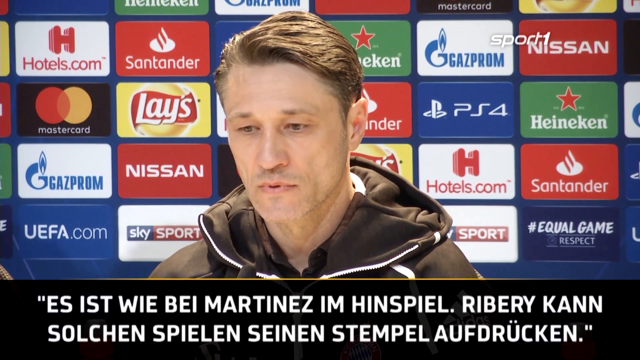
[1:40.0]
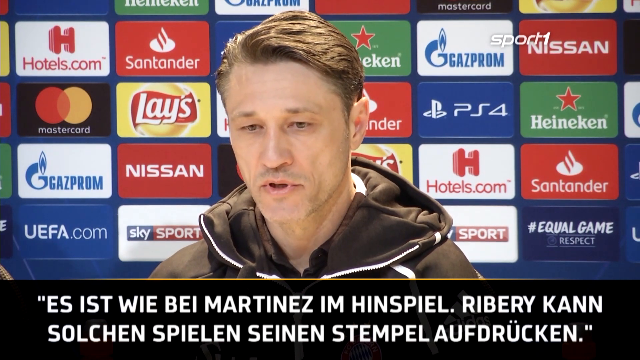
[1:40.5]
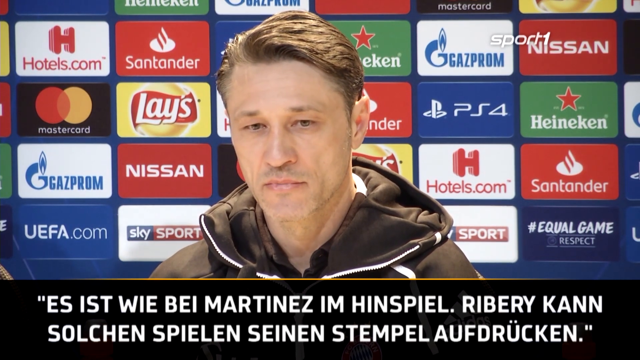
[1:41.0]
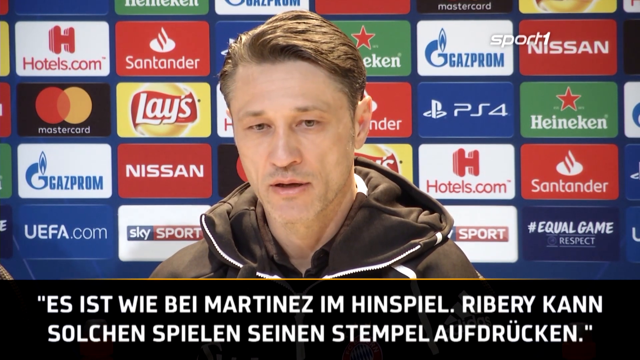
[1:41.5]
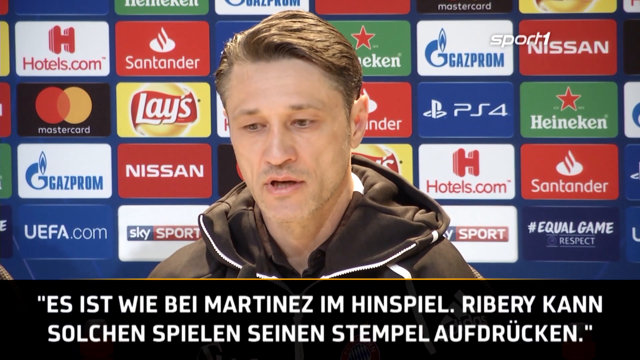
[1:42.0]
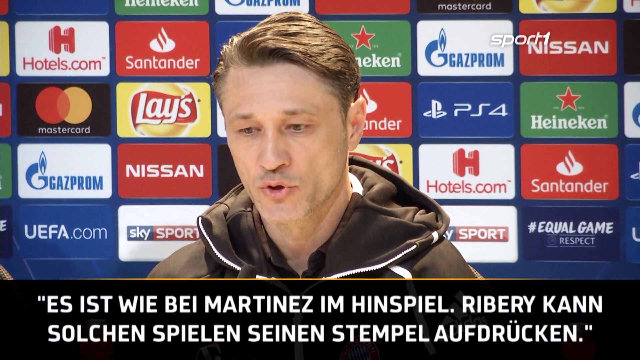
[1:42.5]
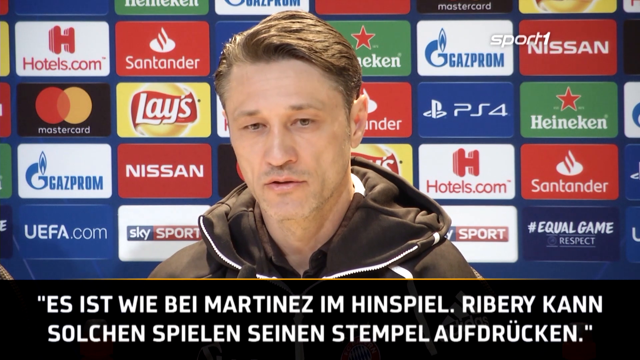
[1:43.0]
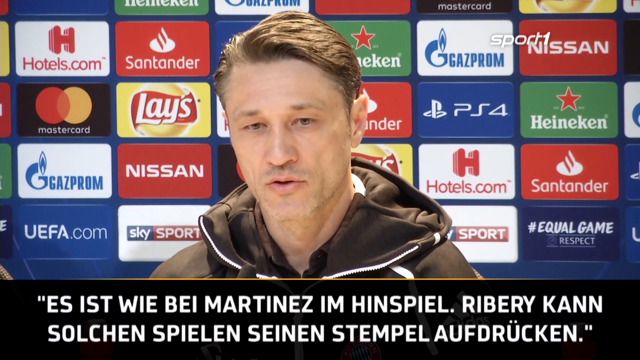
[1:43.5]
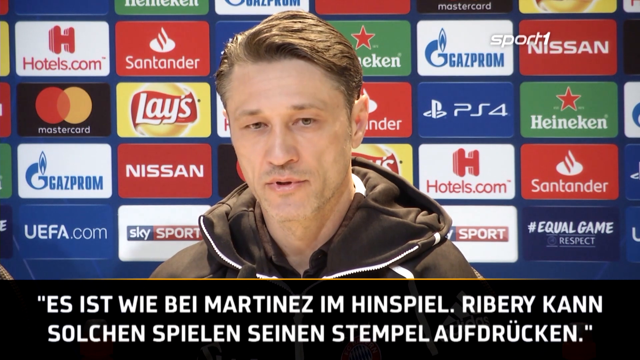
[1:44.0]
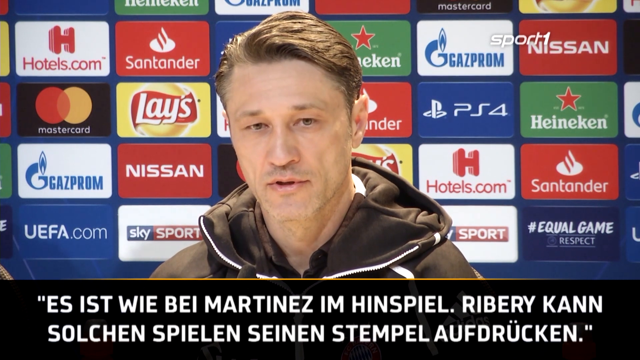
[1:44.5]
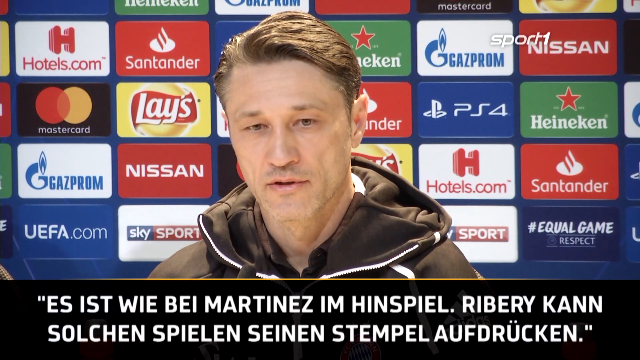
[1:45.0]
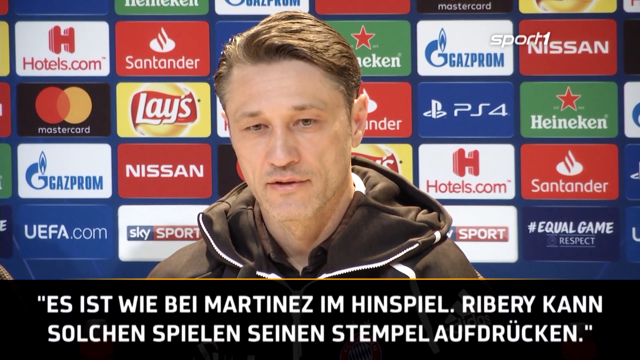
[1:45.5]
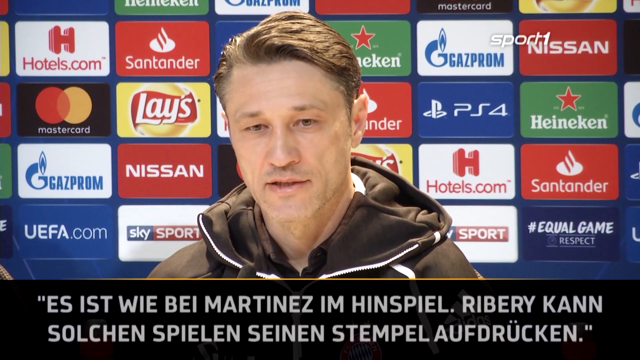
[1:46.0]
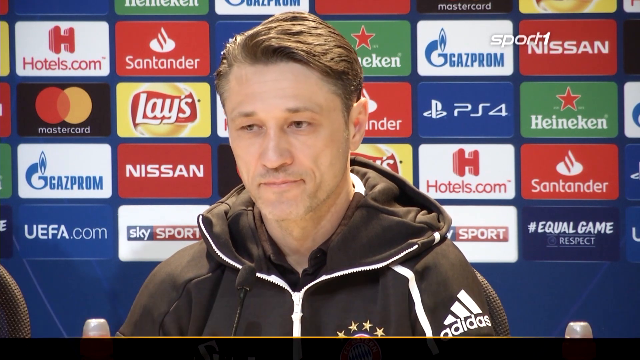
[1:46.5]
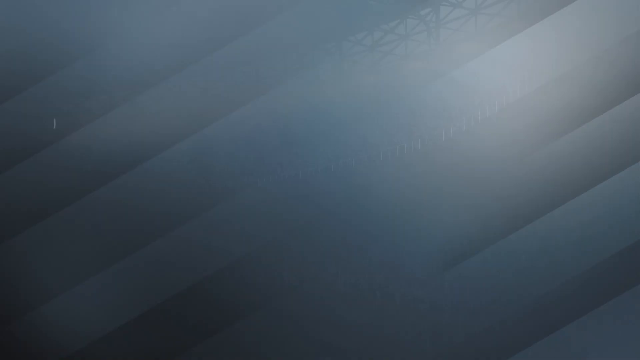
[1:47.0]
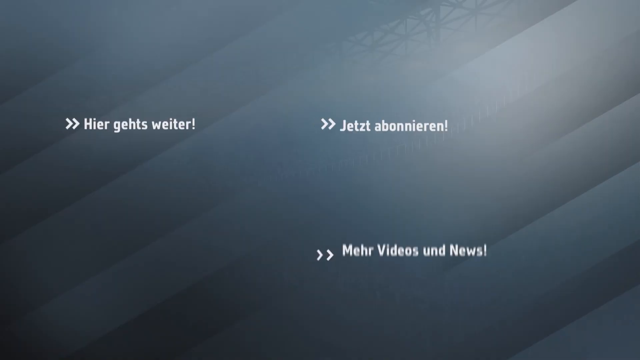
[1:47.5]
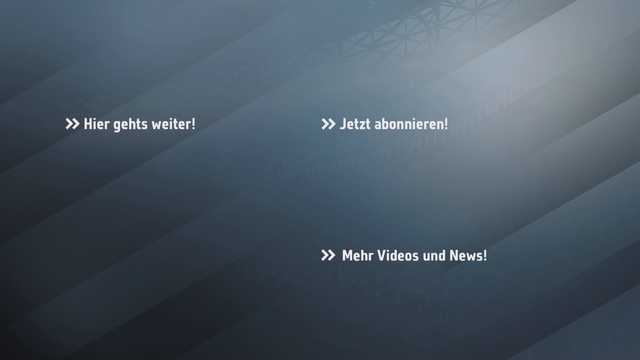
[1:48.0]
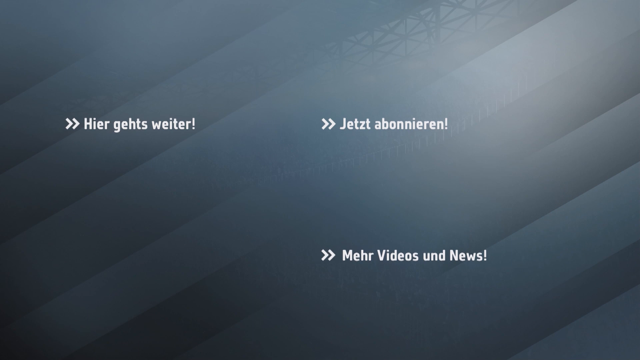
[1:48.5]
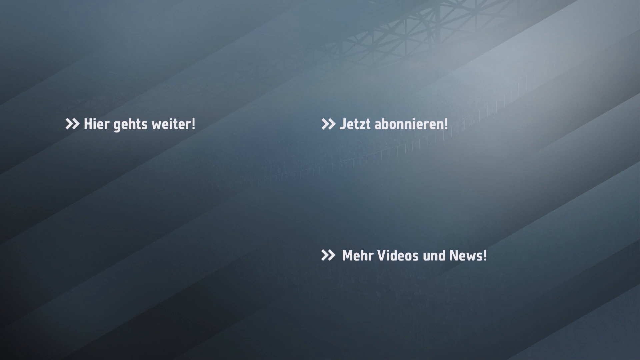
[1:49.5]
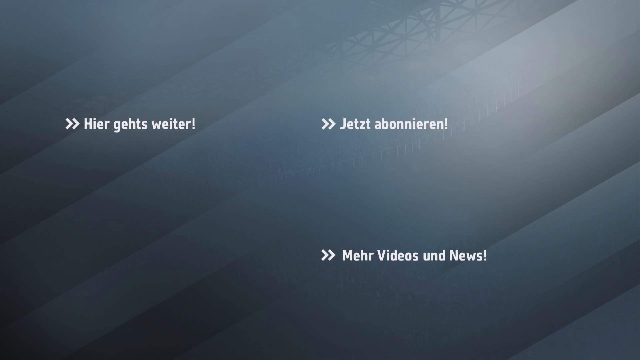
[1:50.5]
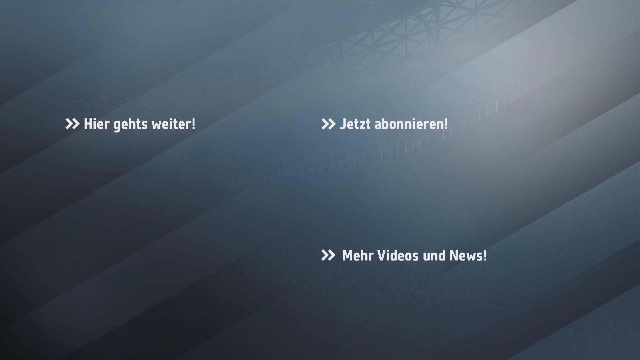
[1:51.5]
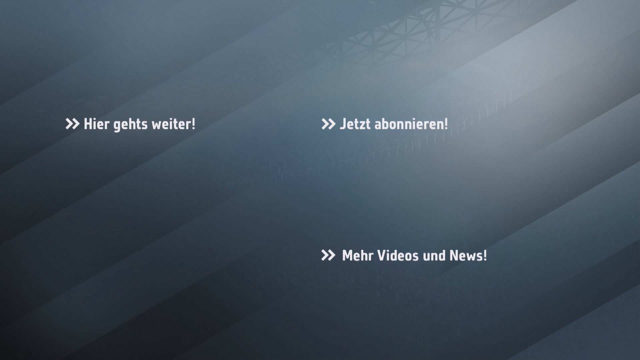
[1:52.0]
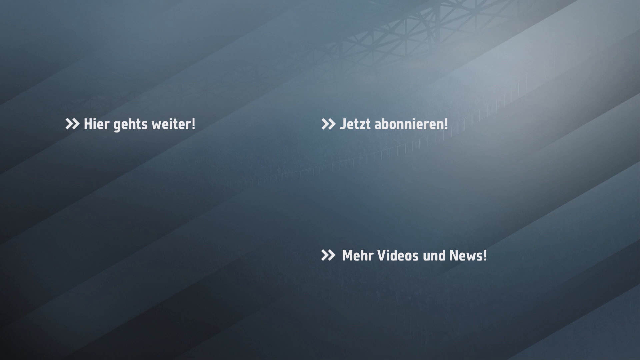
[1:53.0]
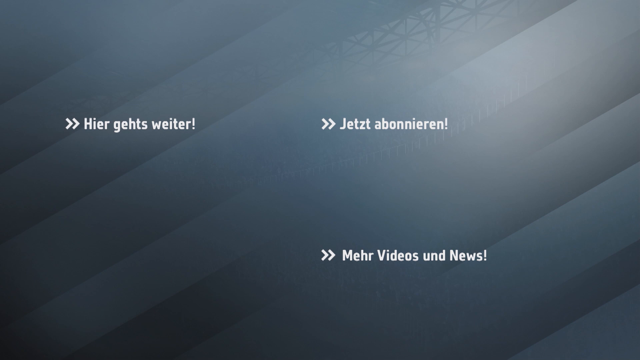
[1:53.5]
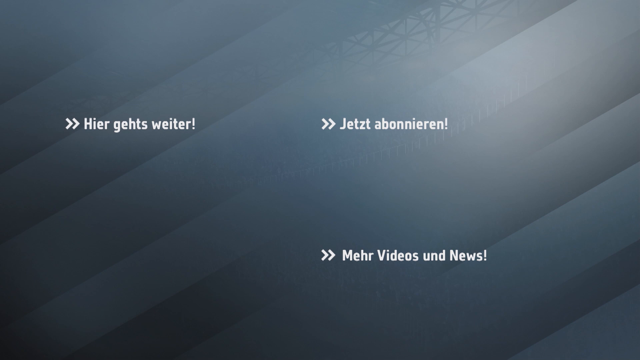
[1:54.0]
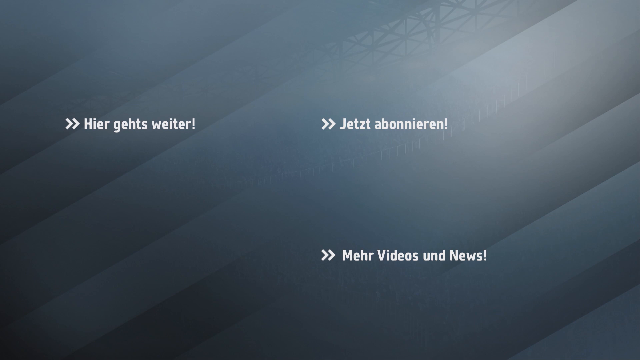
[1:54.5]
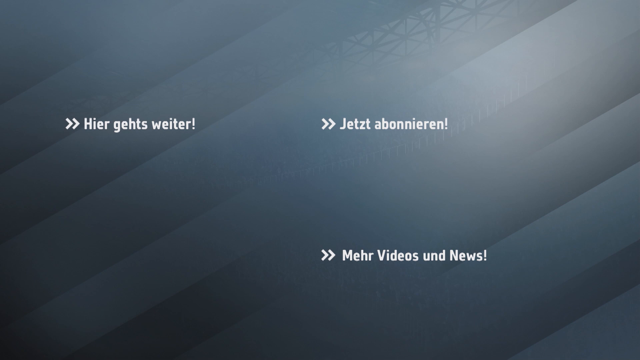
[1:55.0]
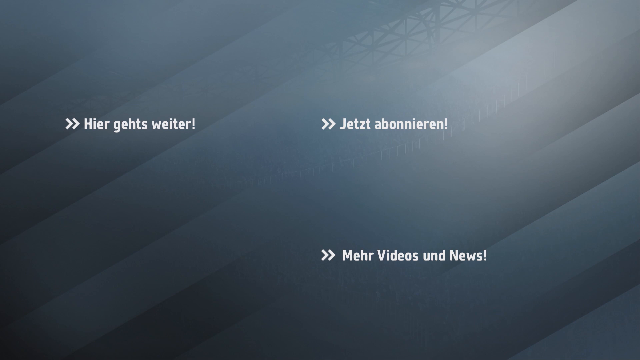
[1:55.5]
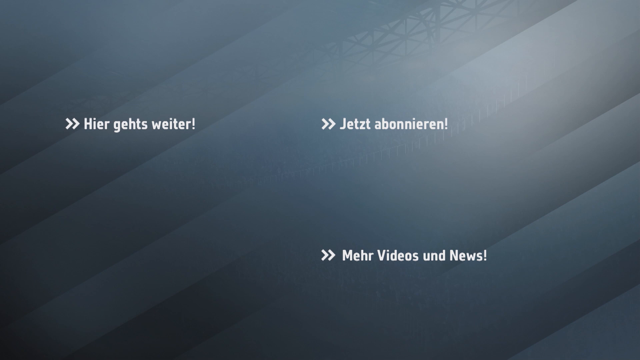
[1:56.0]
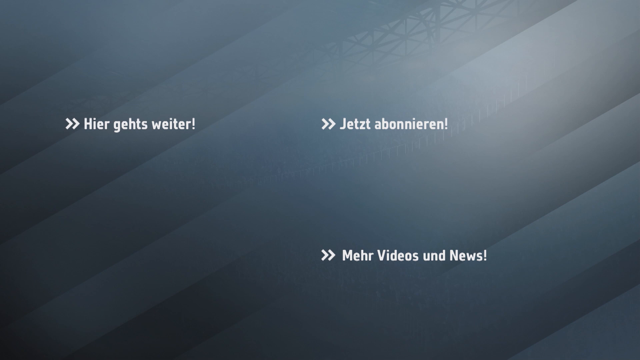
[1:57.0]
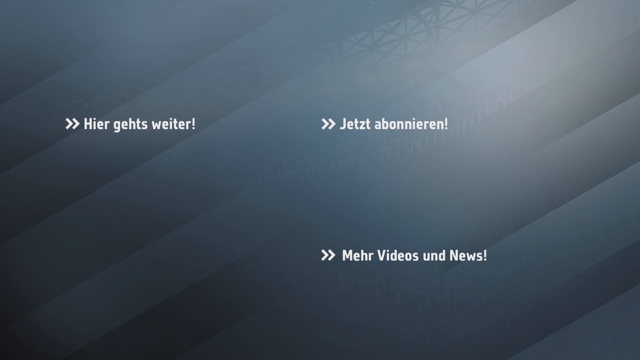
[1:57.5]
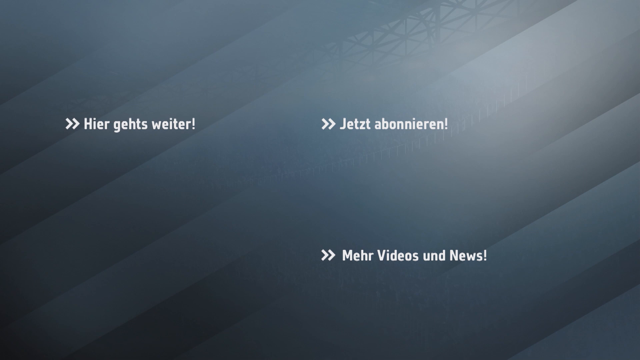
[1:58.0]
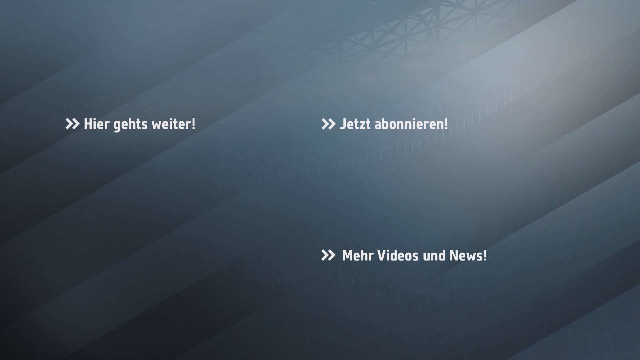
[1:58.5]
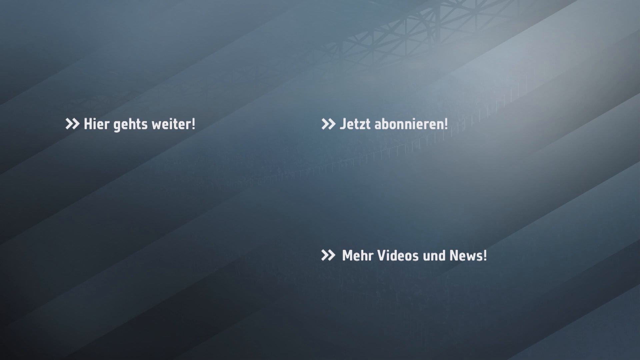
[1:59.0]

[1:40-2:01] A man is sitting in front of a blue banner that takes up the entire wall, with rectangular advertisements from Lays, Nissan, Heineken, Santander, Equal Game Respect, Sky Sports, Hotels.com, PS4, Gazprom and MasterCard. He seems to be answering questions on a sports channel, Sport1, whose logo is at the top right, and seems to be finishing up a question. On the left, text says he is Niko Kovac, the trainer of FC Bayern. He seems very in shape and has small eyes, thin lips, thin eyebrows and dark blonde hair. After the video ends, three German phrases appear on a gray and dark blue faded background, each preceded by two arrows pointing right. The phrases appear to signal options for what to do next, including more videos and news, and two of the phrases have exclamation points.